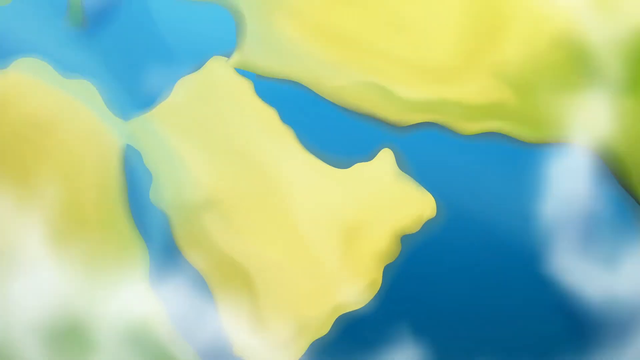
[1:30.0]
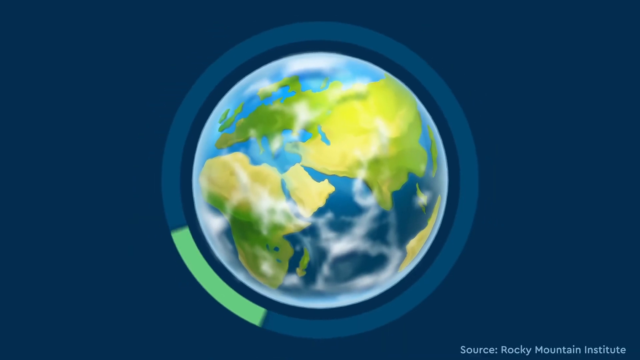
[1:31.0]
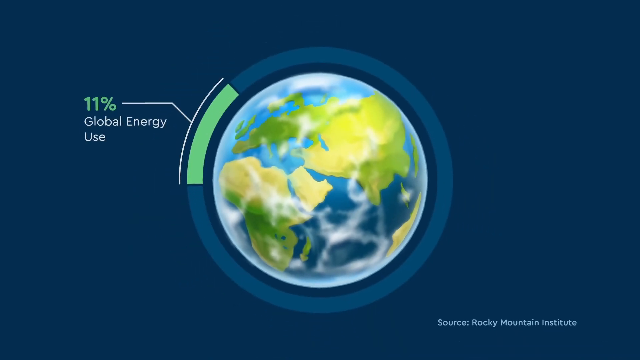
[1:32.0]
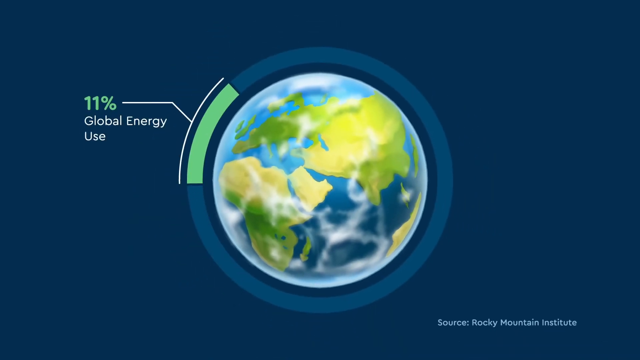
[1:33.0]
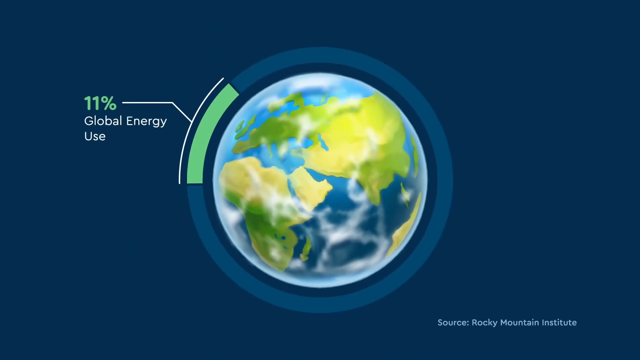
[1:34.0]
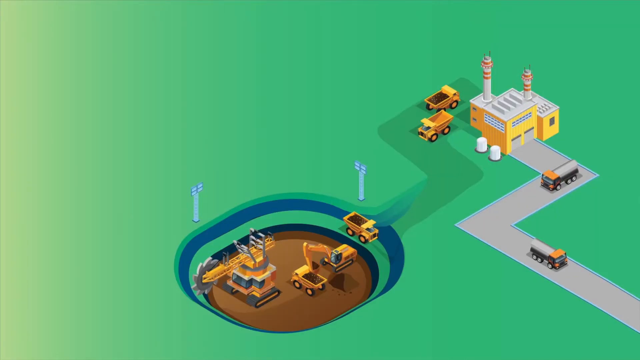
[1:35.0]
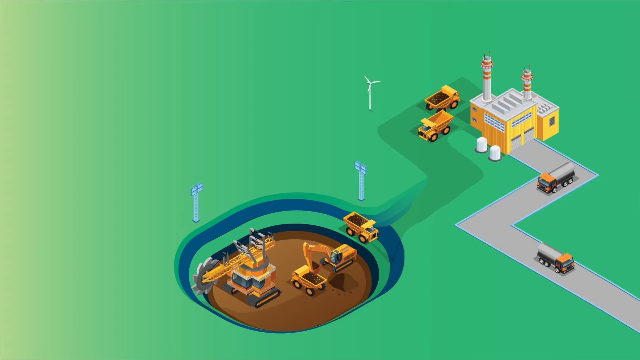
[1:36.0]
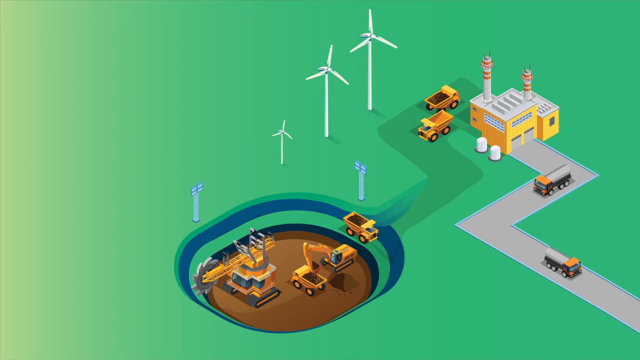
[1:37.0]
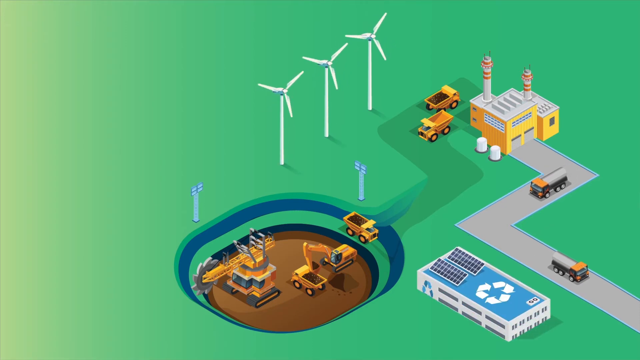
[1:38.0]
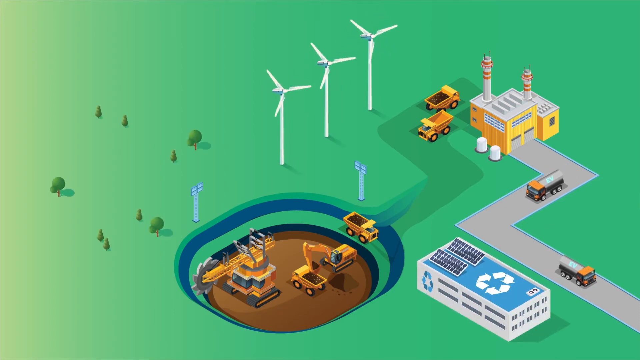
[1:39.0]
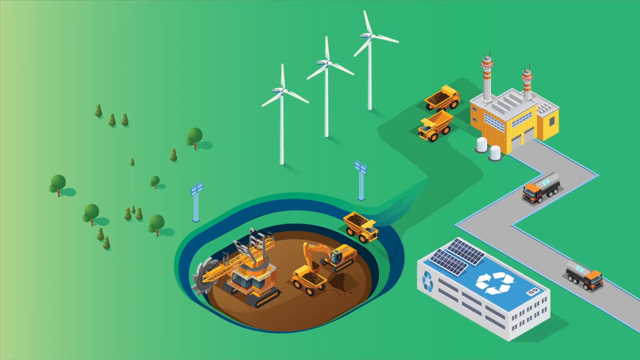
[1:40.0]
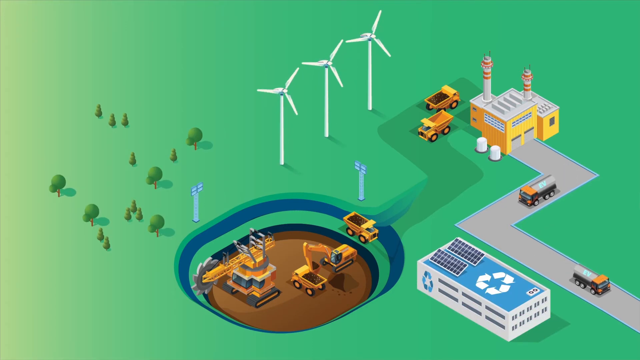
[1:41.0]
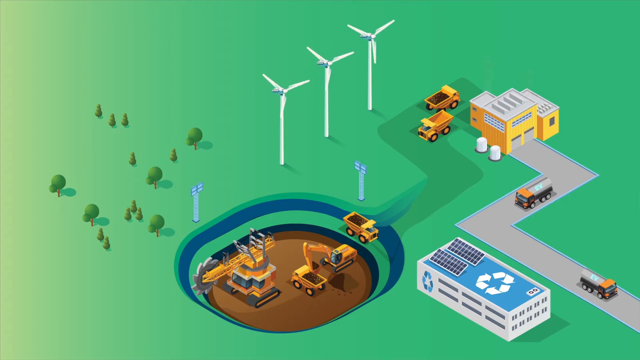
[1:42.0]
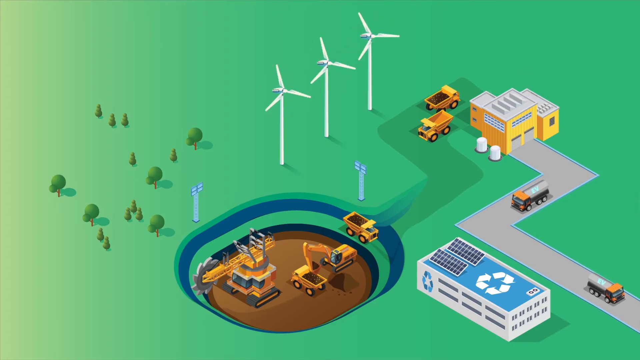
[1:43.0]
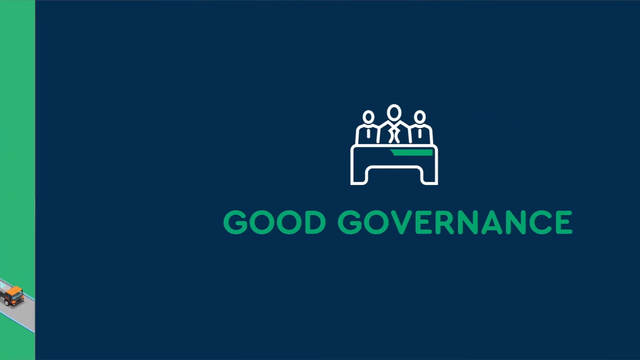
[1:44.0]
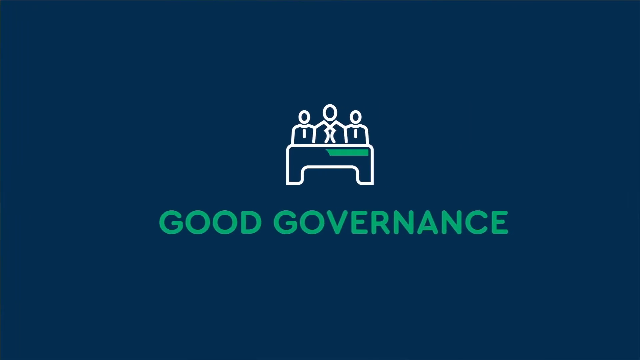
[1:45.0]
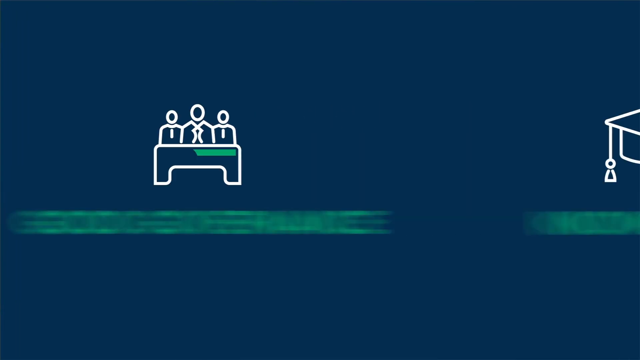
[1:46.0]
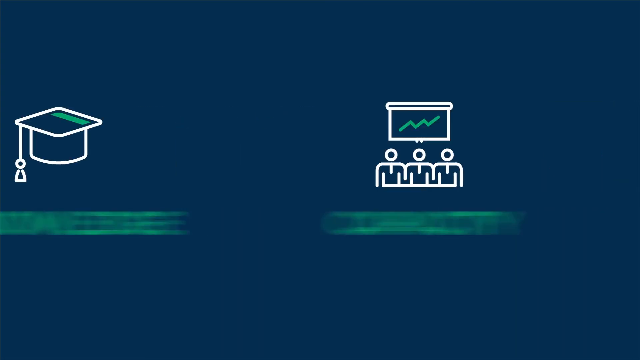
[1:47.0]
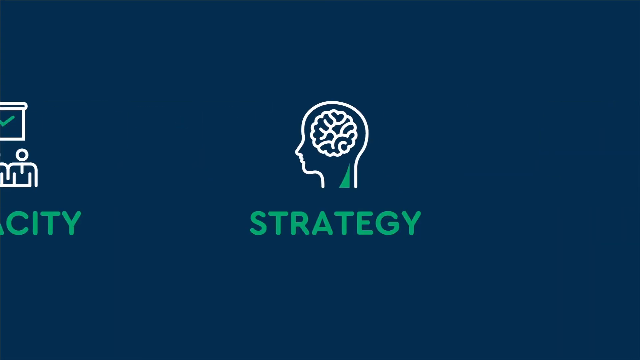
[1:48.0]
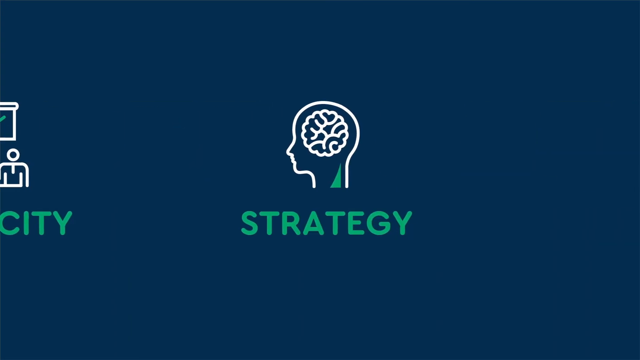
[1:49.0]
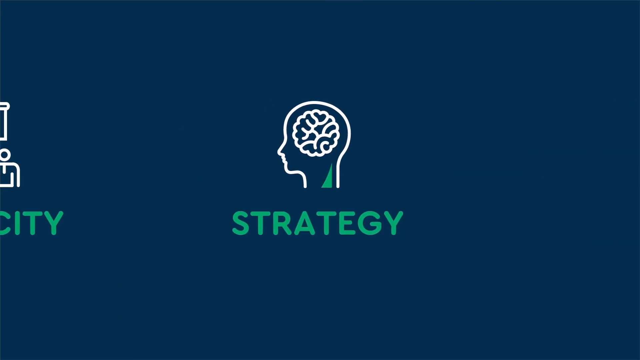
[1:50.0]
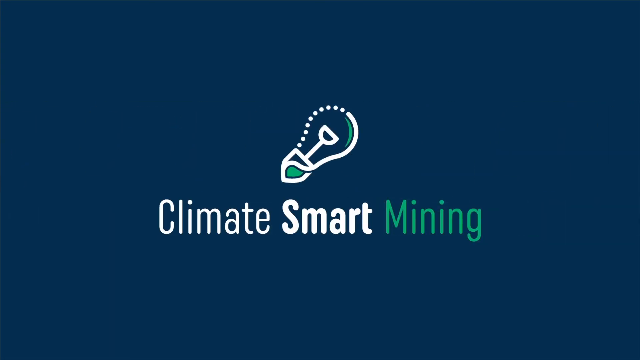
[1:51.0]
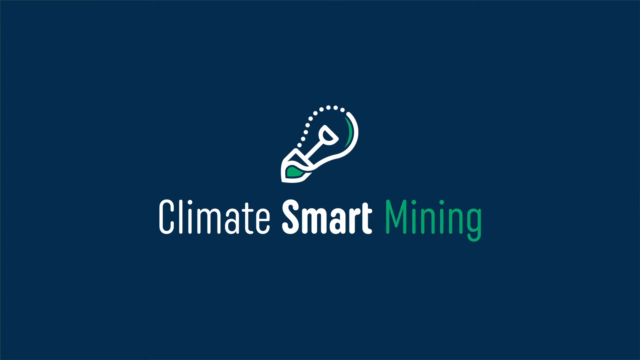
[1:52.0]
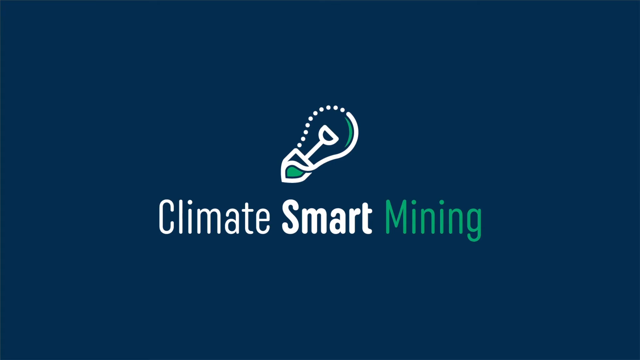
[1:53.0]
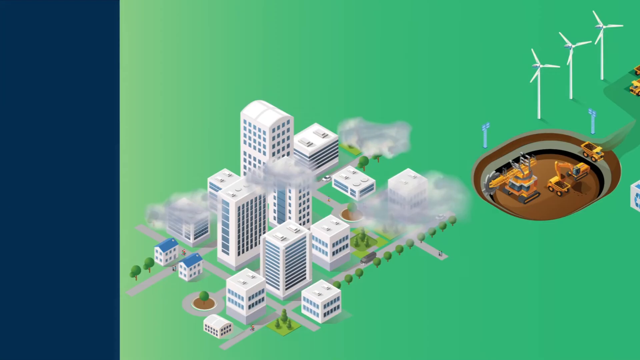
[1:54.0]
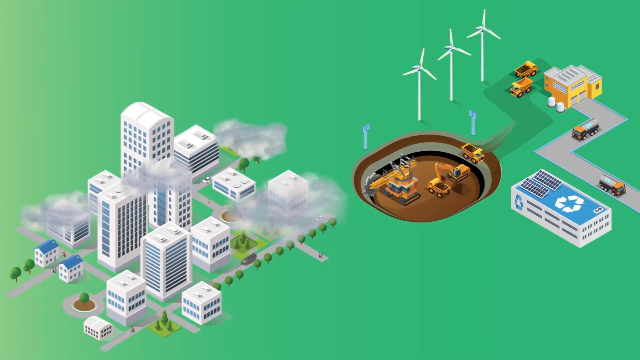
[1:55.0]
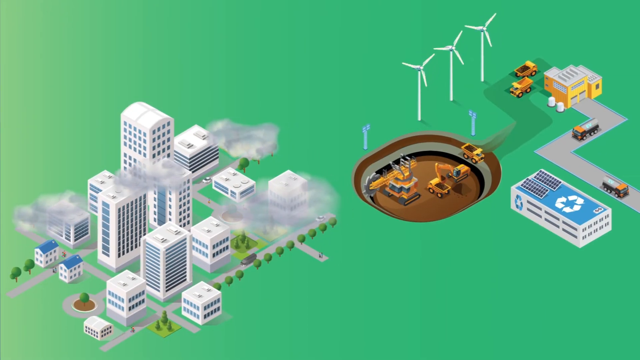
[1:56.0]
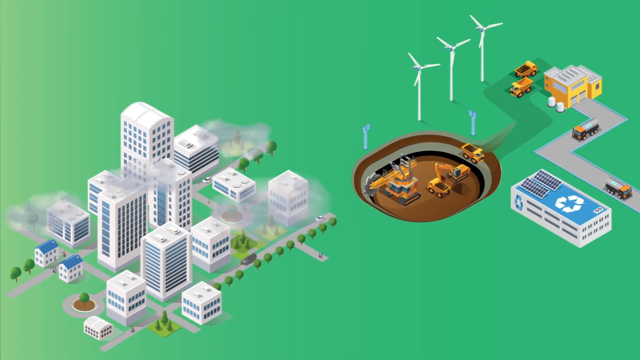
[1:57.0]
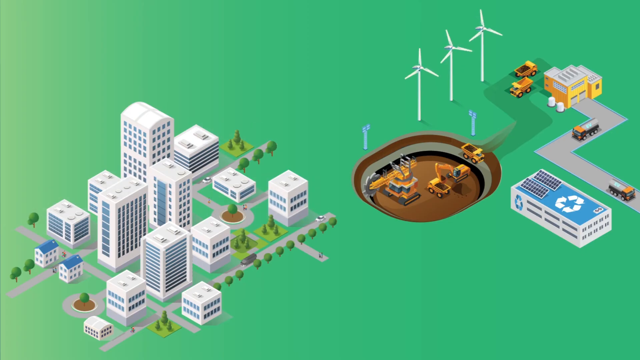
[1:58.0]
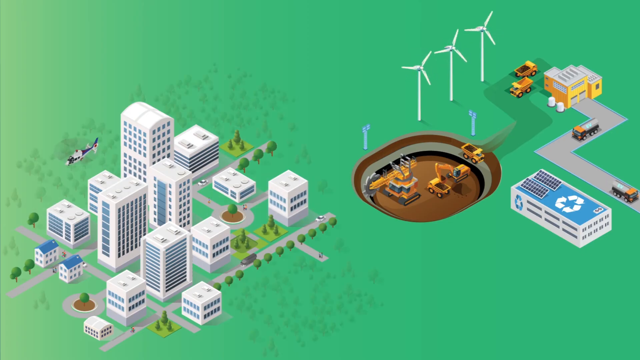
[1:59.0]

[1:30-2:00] The view focuses in on what looks like a particular country on a globe, showing water and land, then focuses back out to show the whole globe. A circle appears around it with the text "11% global energy use," forming a circle graph with a green area for the 11%. Next comes the construction site with dump trucks, apparently a front loader, a couple of other buildings, a garage-like building where some trucks may be kept, and a road coming out of the garage. Three white windmills stand on green grass, and two blue pillar-like objects, maybe lights, shine on the construction site. The windmills turn. An unidentified building has a pad on it, possibly a hospital or a helicopter landing pad, with solar panels on top; trees have grown up, and little trucks move. A blue background then shows "good governance," "knowledge" with a graduation hat above it, "capacity," "strategy" and "climate smart mining." The view returns to the city and construction site: white buildings with many windows, skyscrapers, trees, roads in front of the buildings, smoke, windmills, apparently a hospital with a helipad and solar panels on top, construction trucks in the garage, and the street coming out from the garage.